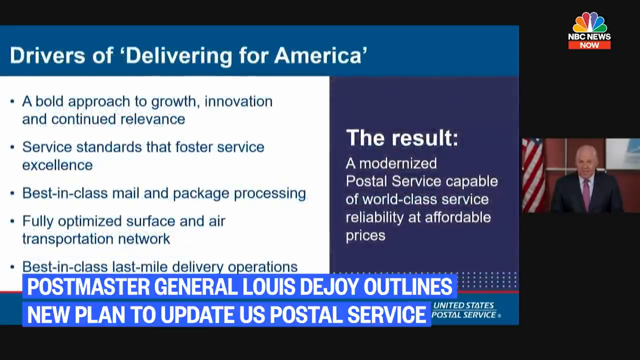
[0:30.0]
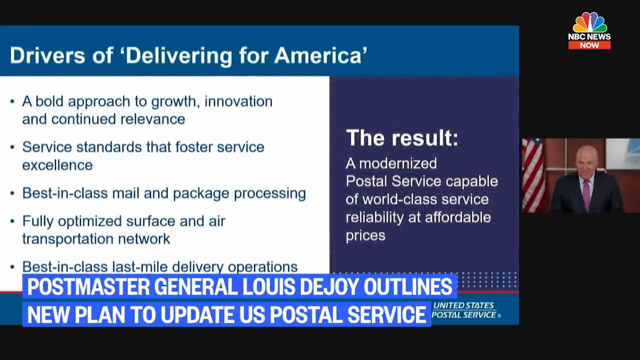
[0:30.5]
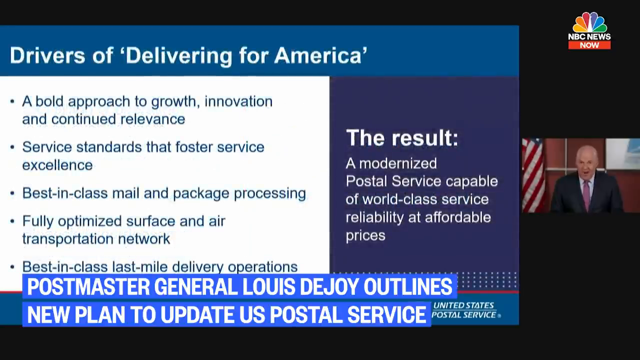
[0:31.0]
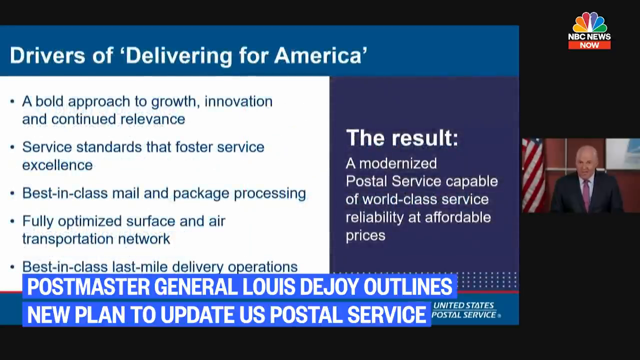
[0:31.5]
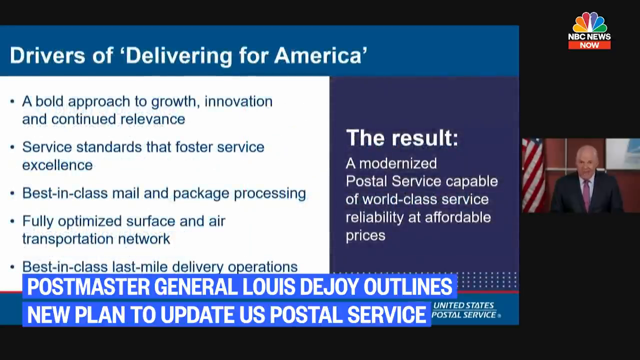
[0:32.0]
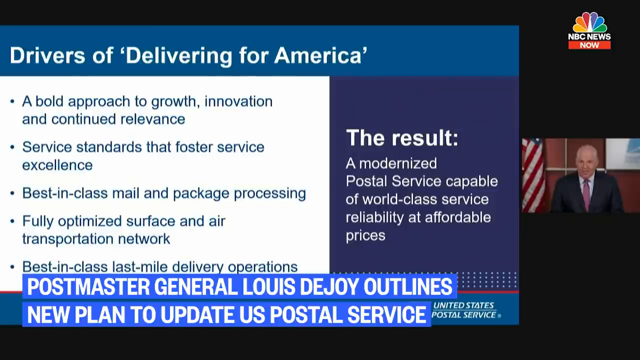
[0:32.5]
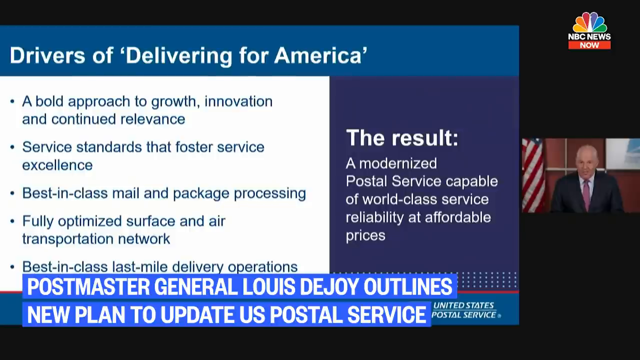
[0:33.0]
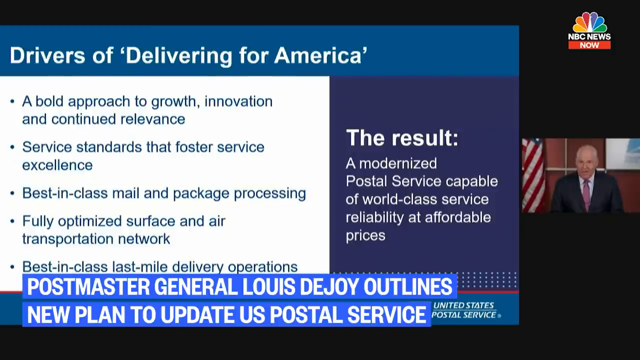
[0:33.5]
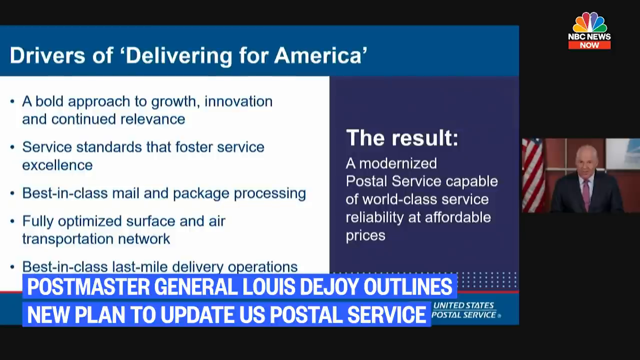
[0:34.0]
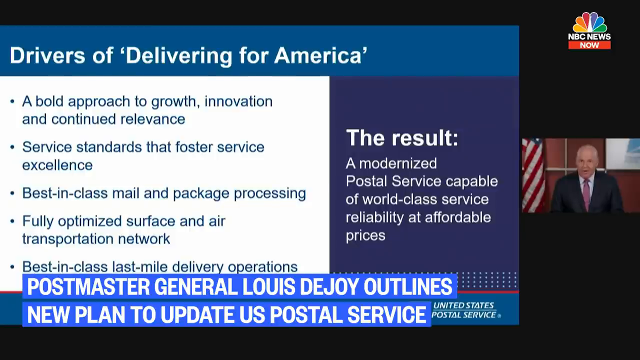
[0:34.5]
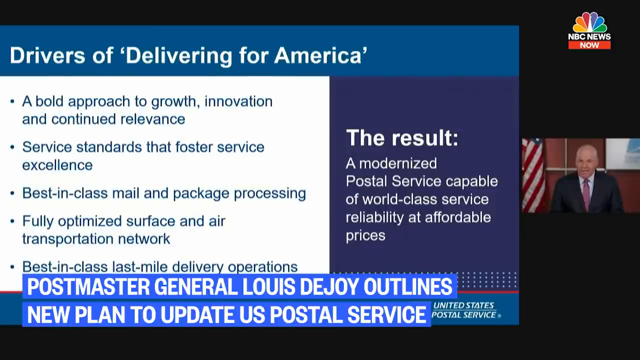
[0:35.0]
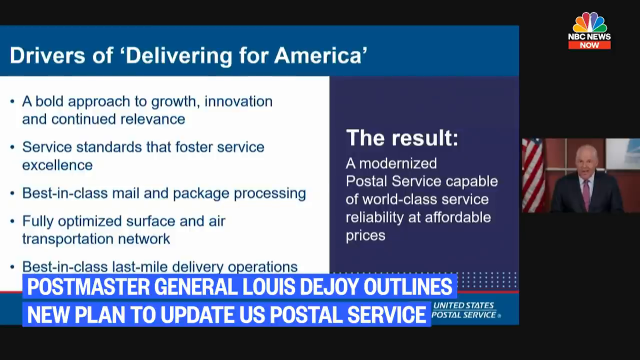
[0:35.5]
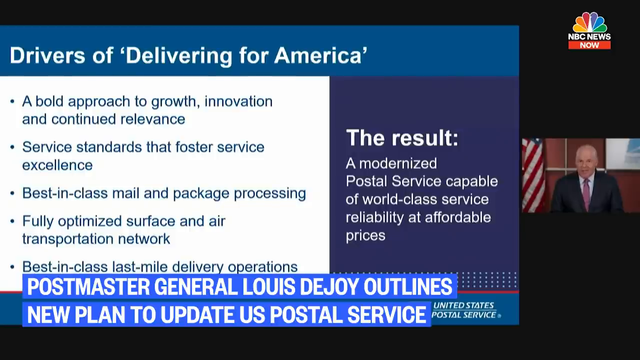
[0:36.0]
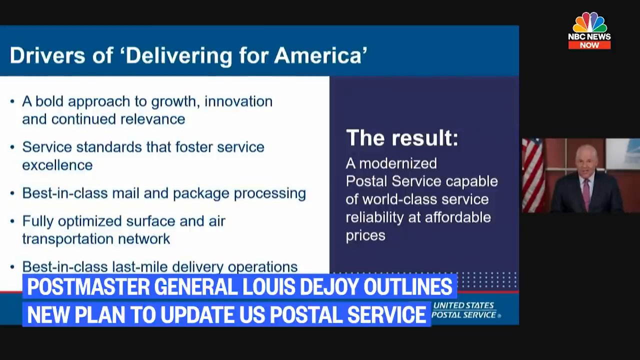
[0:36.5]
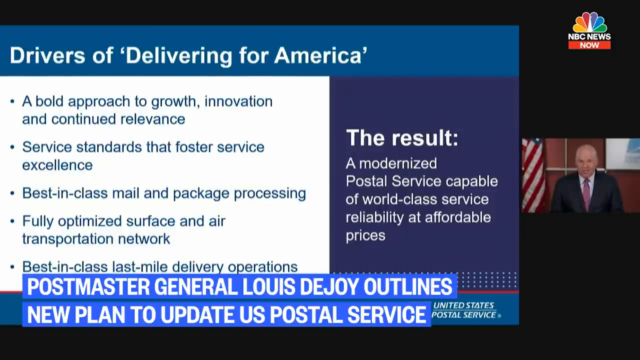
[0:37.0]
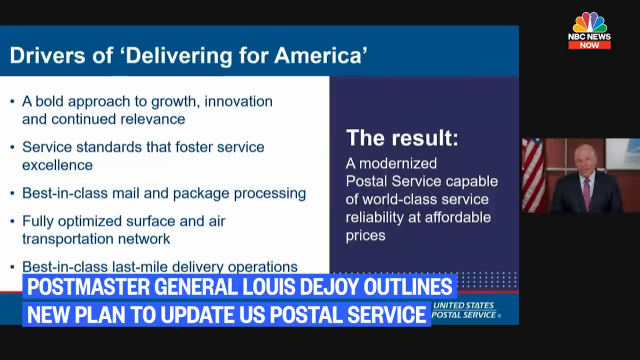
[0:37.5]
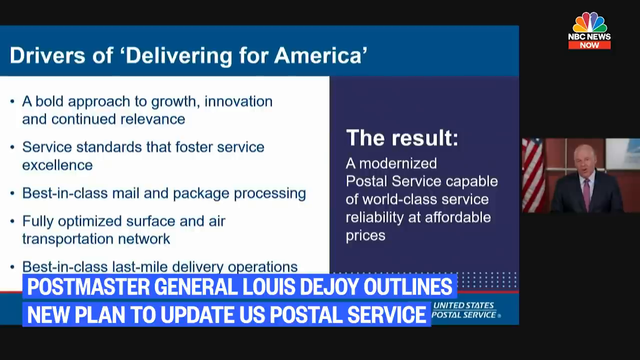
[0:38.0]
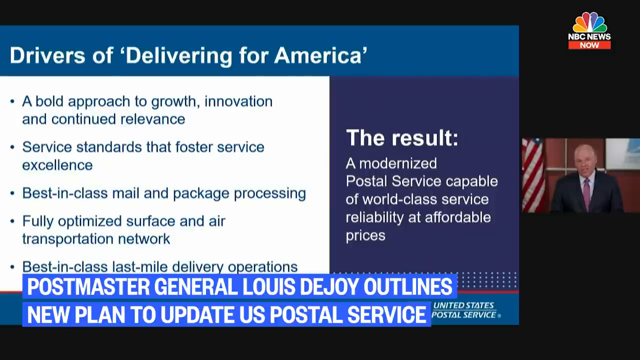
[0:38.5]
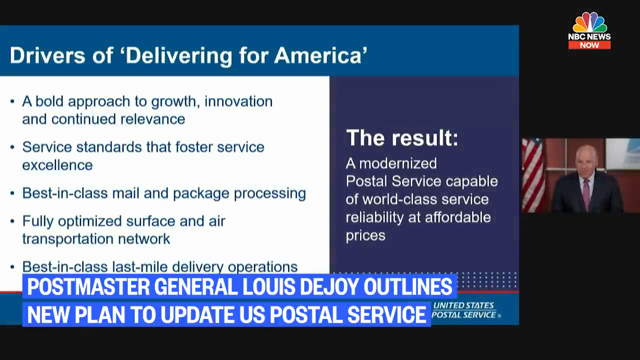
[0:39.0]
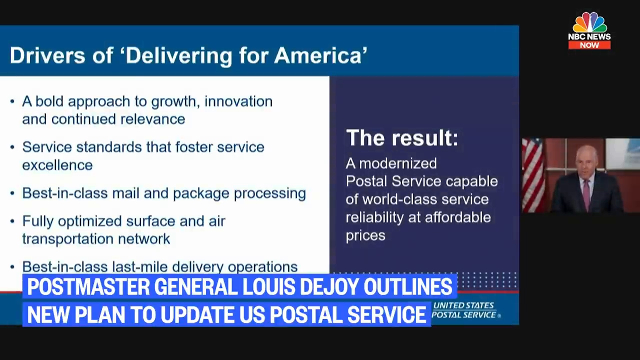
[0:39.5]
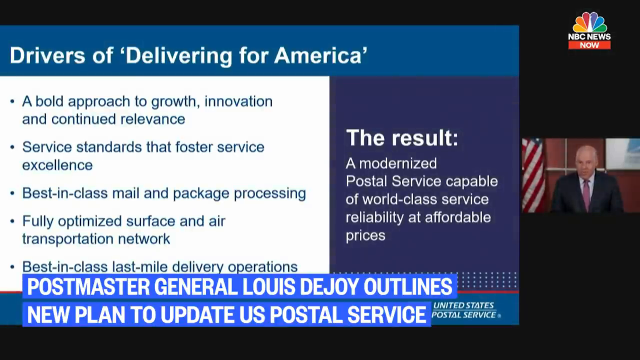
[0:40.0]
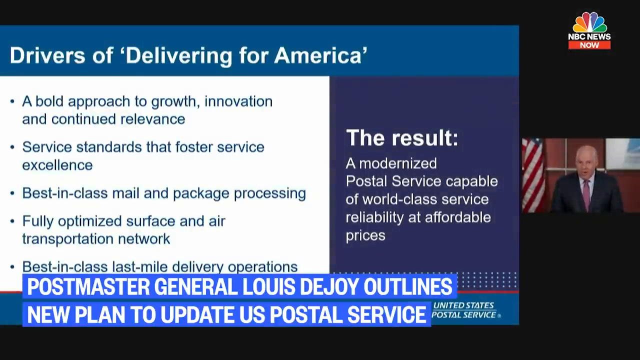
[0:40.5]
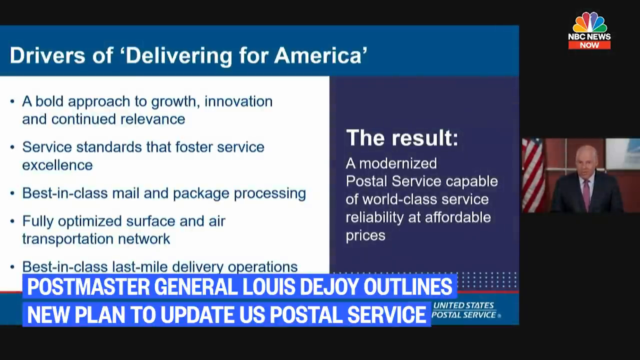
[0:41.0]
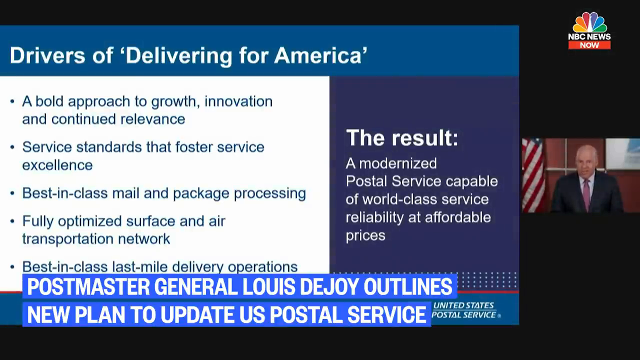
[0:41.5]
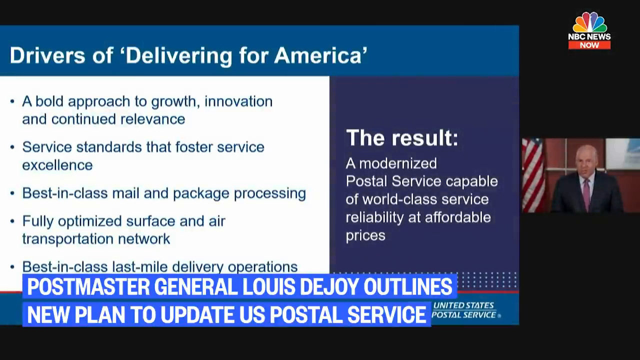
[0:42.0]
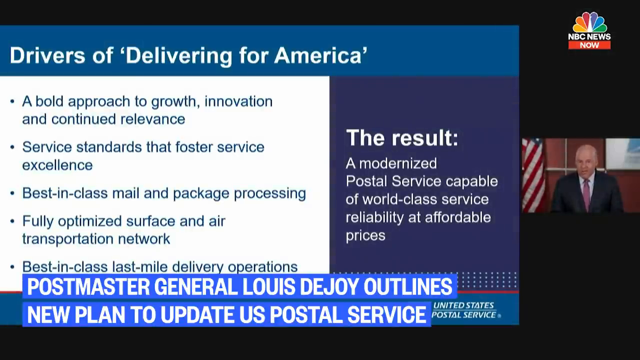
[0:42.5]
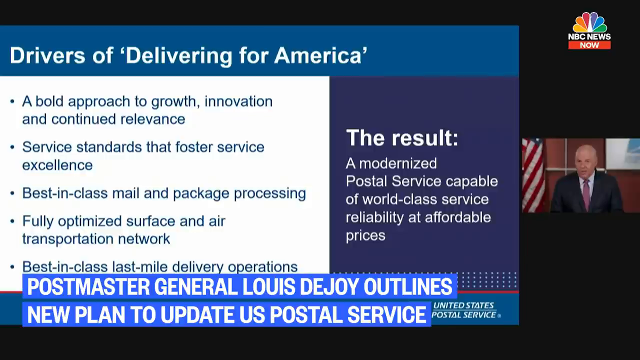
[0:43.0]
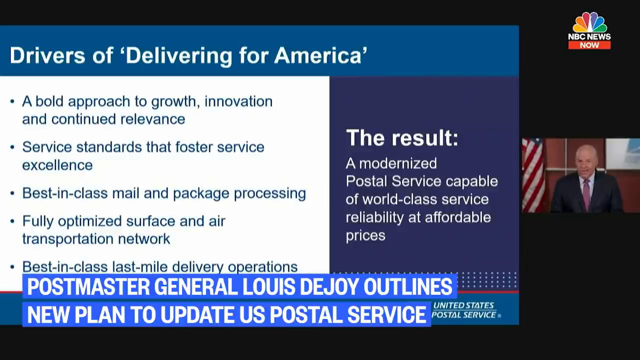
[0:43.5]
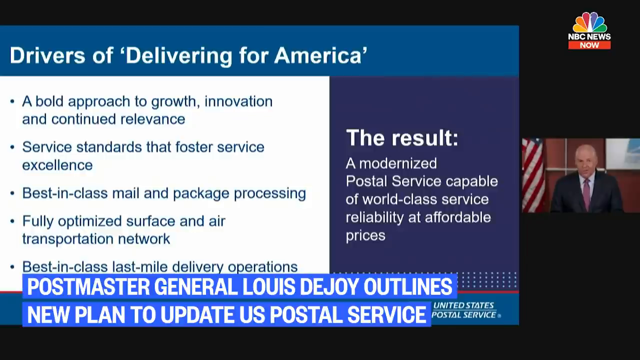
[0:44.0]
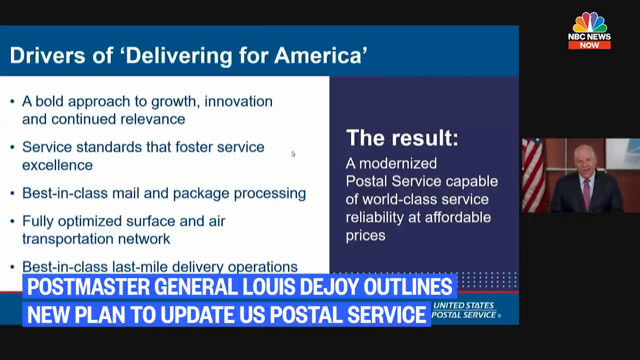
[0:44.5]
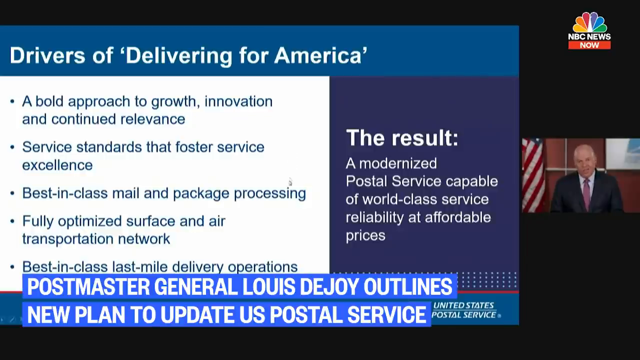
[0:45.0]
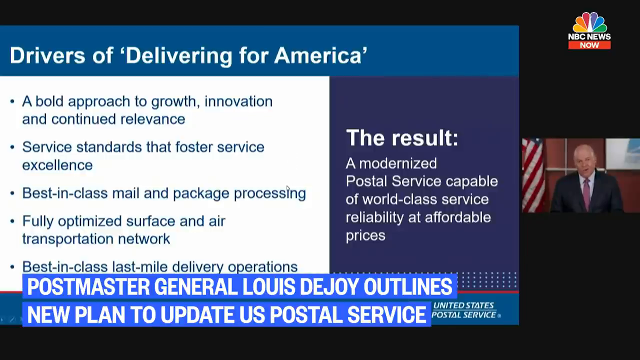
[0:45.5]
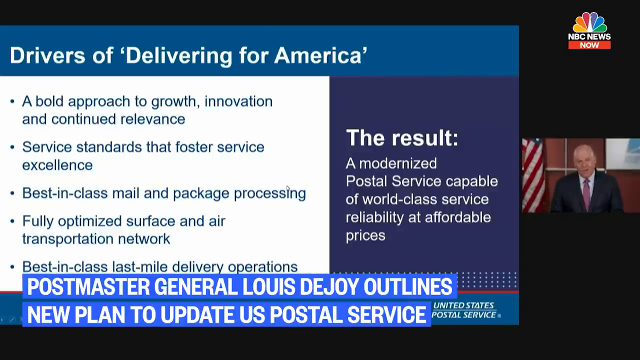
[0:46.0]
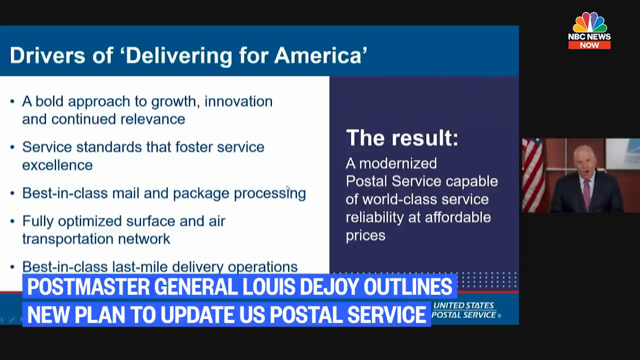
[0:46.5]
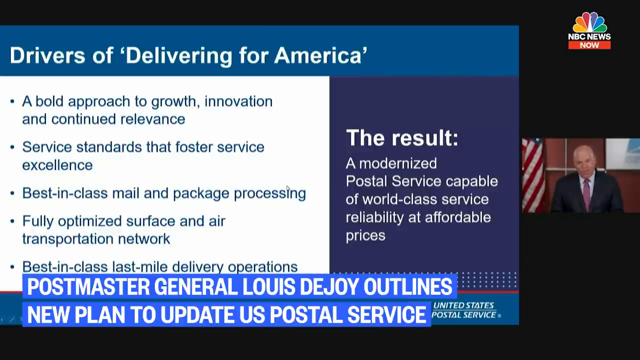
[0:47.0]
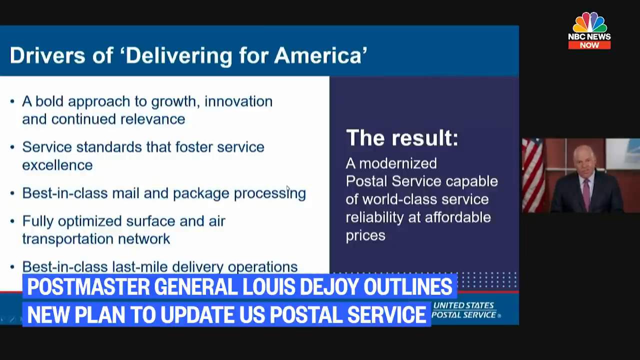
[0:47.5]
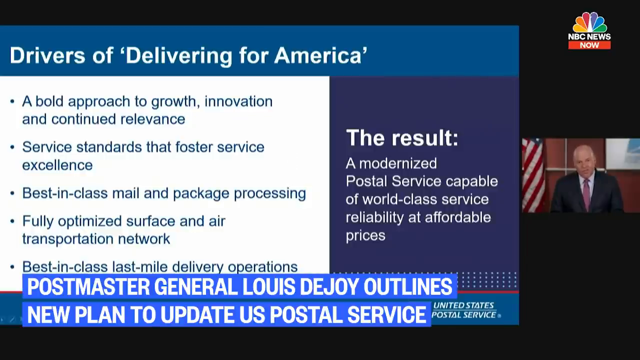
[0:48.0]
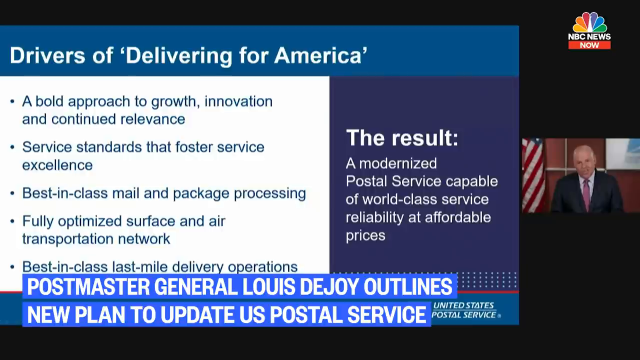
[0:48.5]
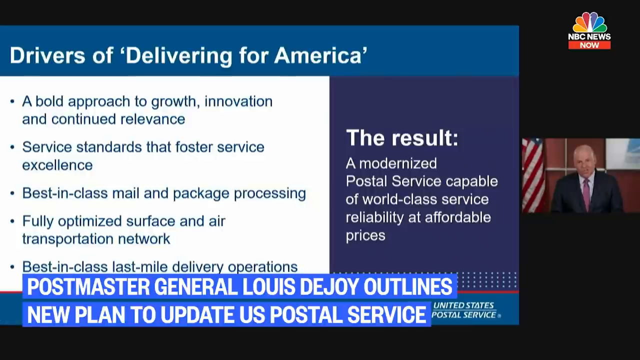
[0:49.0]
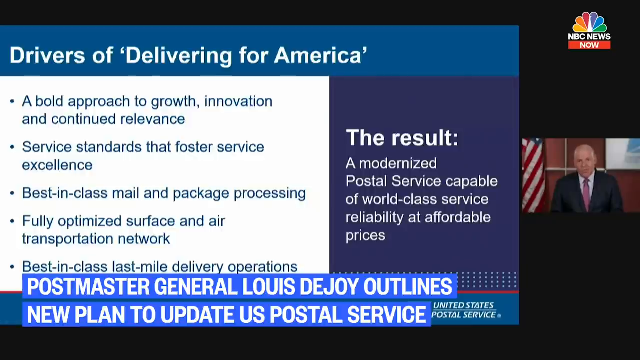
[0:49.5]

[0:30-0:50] A slide that is part of an NBC News segment shows a message from the United States Postal Service. At the top of the slide is a blue banner with the words "Drivers of Delivery for America" written in white. Below the banner, on a white background, the bullet points read "a bold approach to growth, innovation, and continued relevance," "service standards that foster service excellence," "best-in-class mail and package processing," "fully optimized surface and air transportation network," and "best-in-class mail delivery operations." On the right side, on a purple background, white text reads "the result, a modernized postal service capable of world-class service reliability at affordable prices." The bottom of the video reads "Postmaster General Lewis DeJoy outlines new plans to update the U.S. Postal Service." On the right side, a person in a business suit talks to the camera.